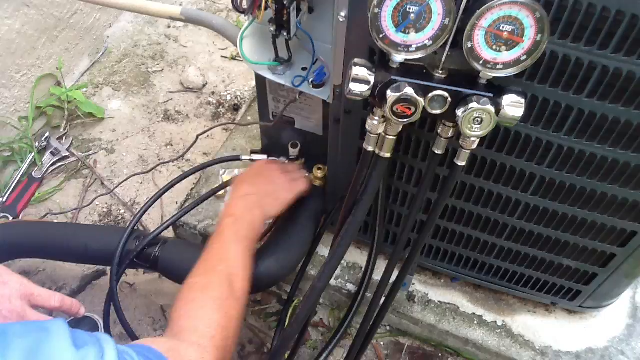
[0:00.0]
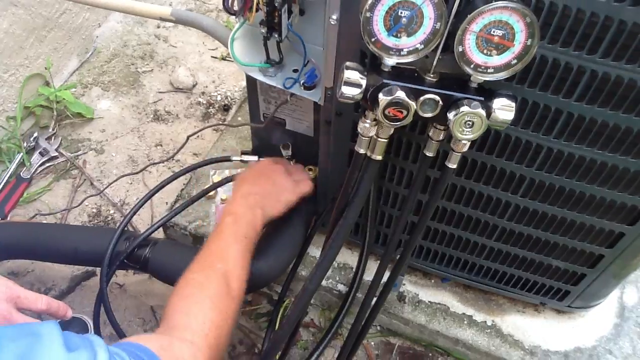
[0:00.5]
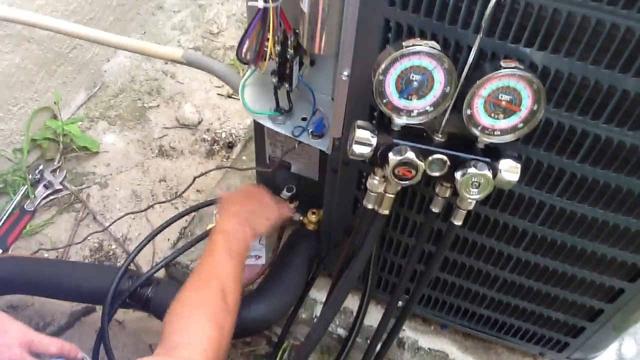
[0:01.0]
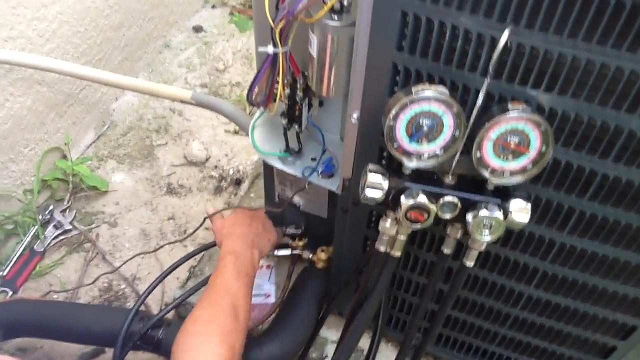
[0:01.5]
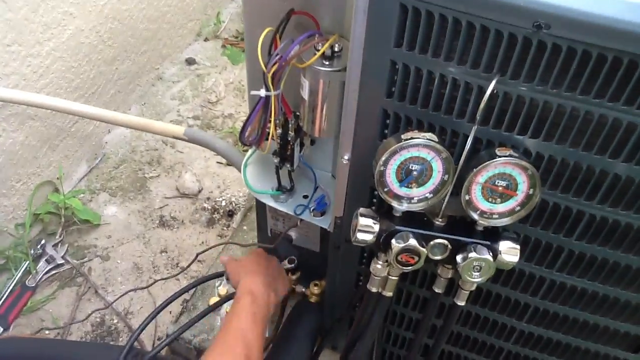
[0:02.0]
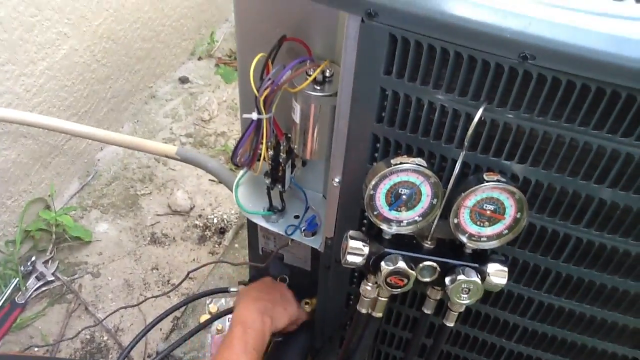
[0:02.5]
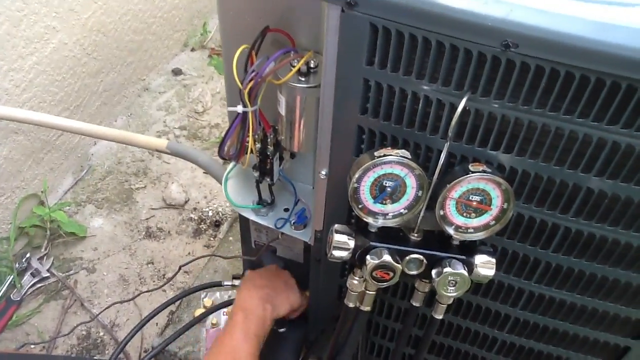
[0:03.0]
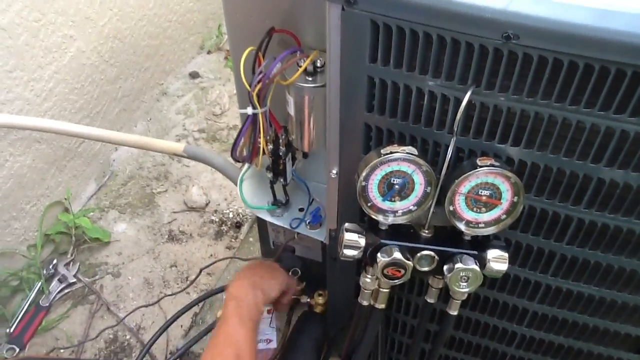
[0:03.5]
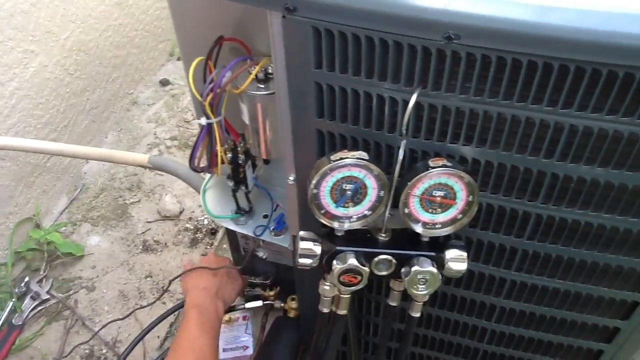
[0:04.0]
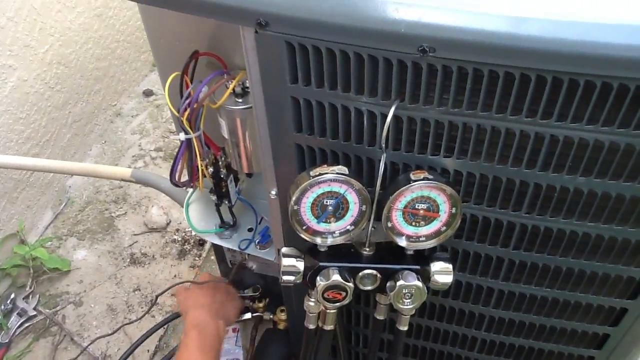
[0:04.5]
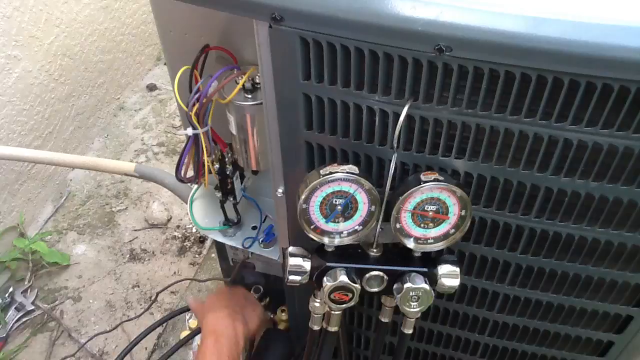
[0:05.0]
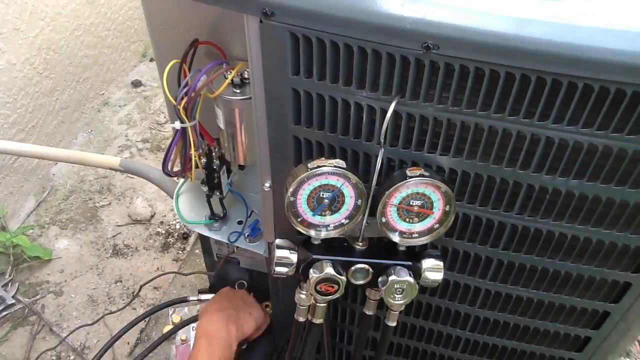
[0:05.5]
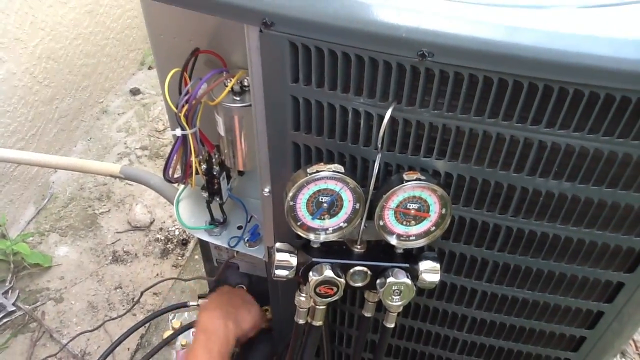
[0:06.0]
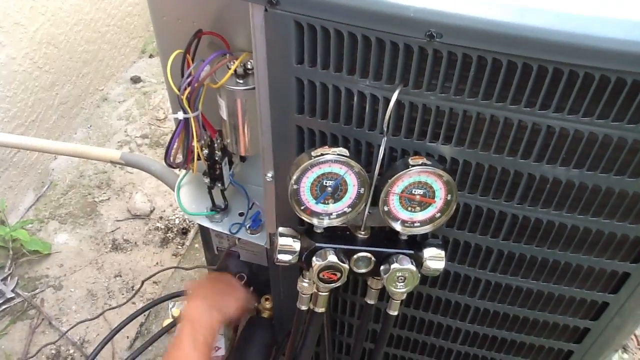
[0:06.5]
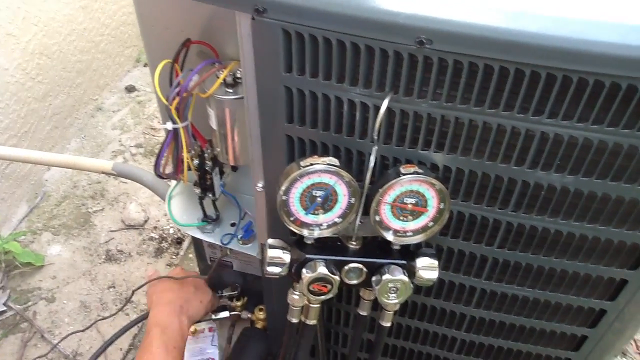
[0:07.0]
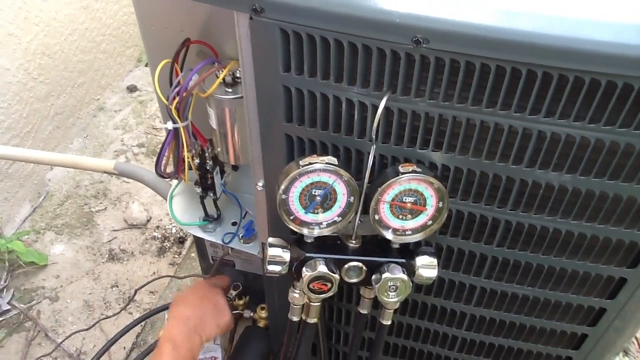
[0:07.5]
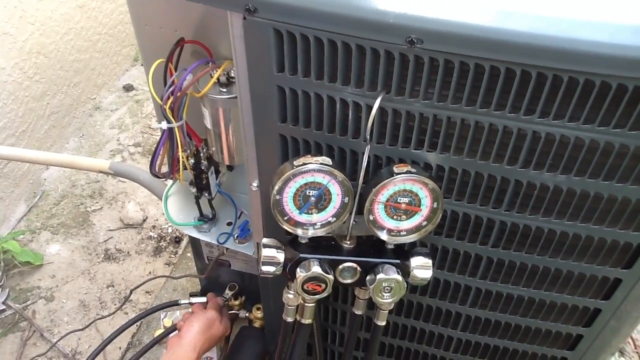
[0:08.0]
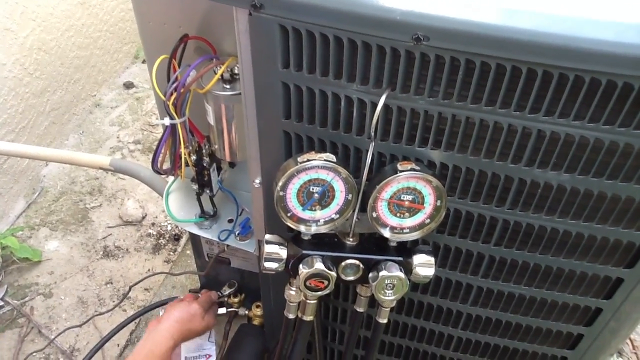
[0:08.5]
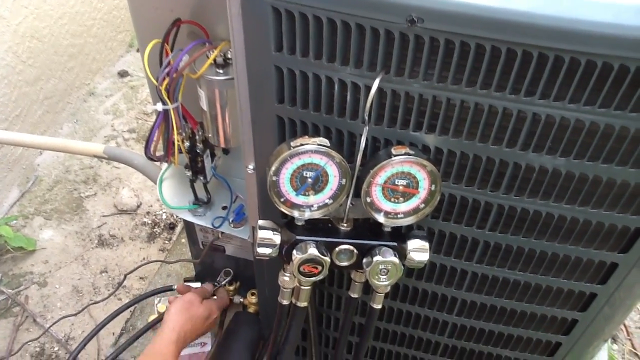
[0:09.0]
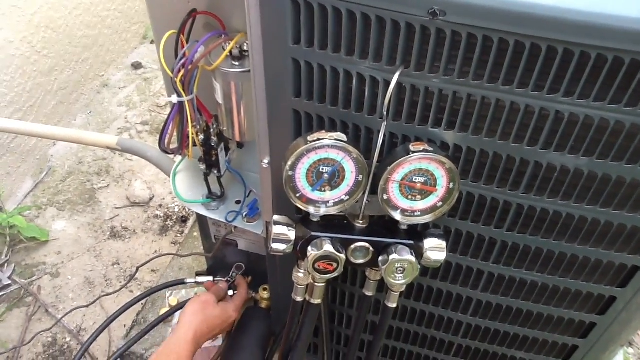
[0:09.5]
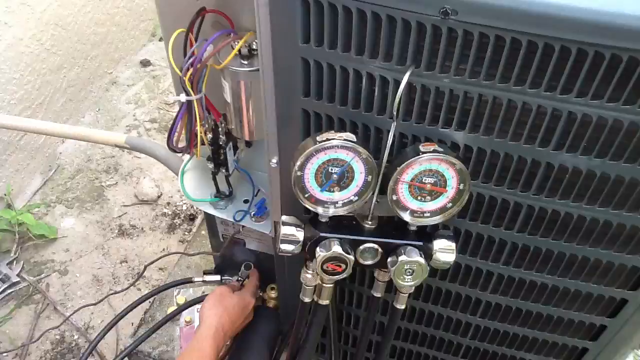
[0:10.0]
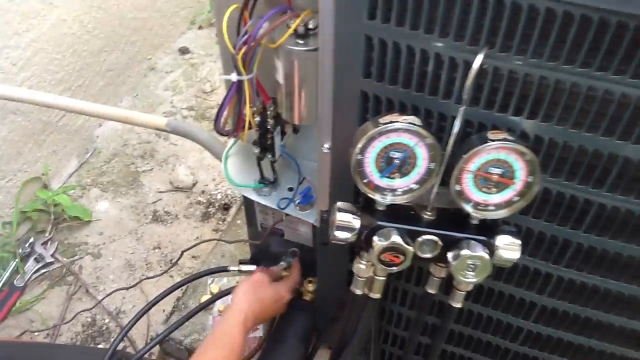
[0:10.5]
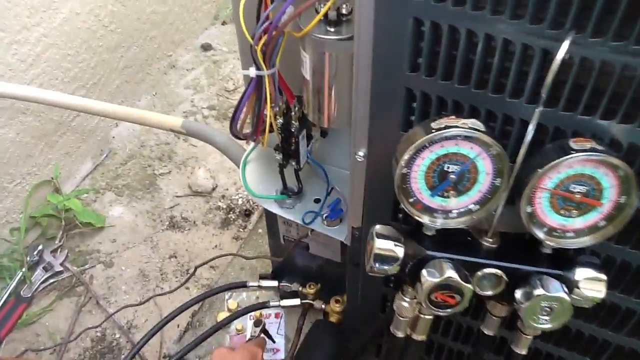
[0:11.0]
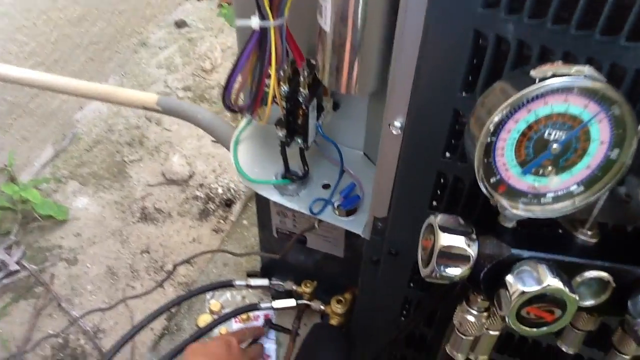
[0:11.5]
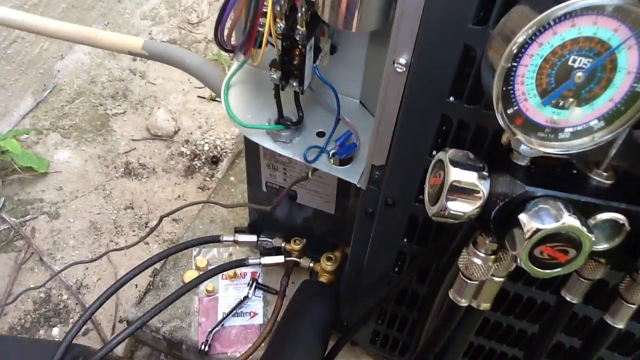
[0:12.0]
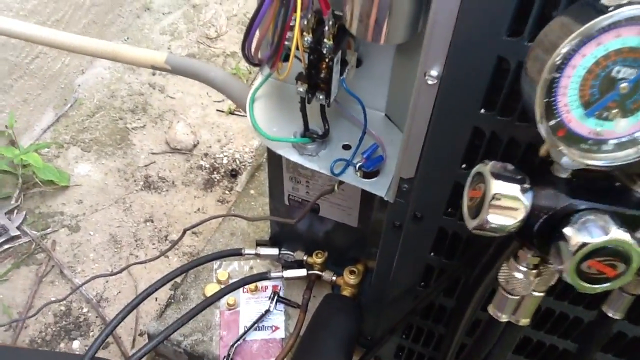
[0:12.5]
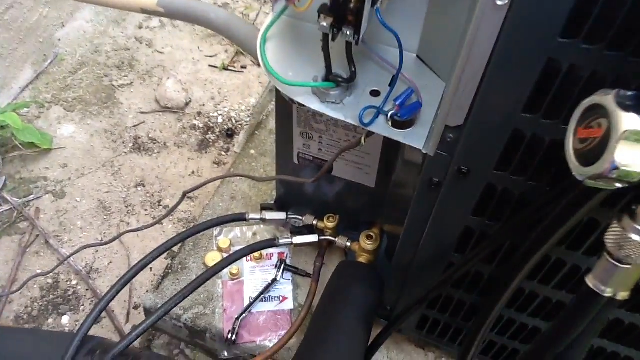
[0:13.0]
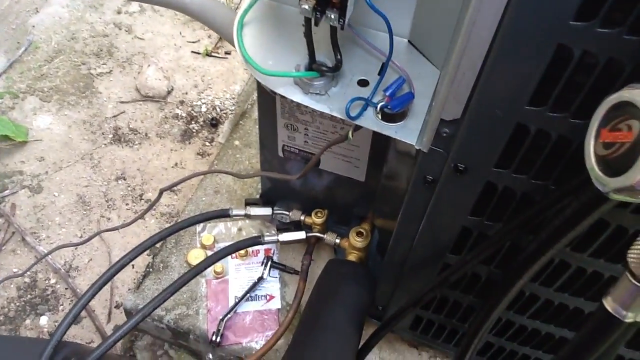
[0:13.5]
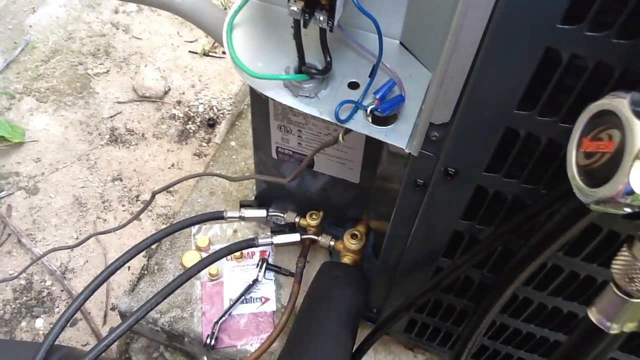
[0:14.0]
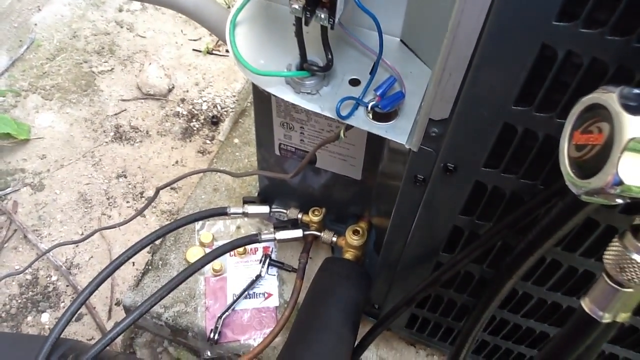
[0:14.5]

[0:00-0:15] The side of what looks like an outdoor HVAC heating and air conditioning unit is shown. Someone's right hand holds some kind of screwdriver and tightens, or maybe loosens, some kind of pipe in a hose. A wire comes out of the side of the unit. Beside the big HVAC unit is a device that looks like it measures gas, with gauges on its side; possibly Freon or something is being put into the unit and measured with it. The person seems to be tightening or loosening two screws where some black pipes come out of the side of the unit. Wires are visible inside, above, as if the cover has been taken off, so the inside of the unit can sort of be seen at one corner. The ground beside the unit has a wrench and a screwdriver on it, and maybe a dirt plant or a grass-type weed.